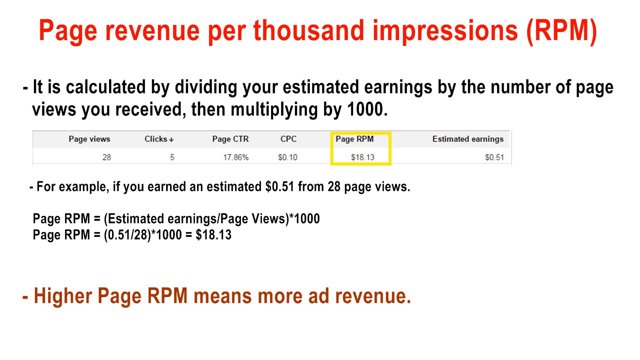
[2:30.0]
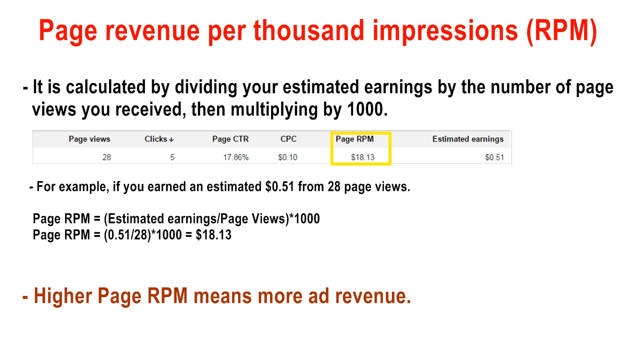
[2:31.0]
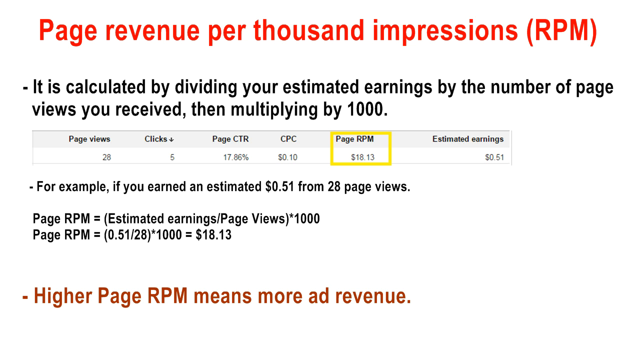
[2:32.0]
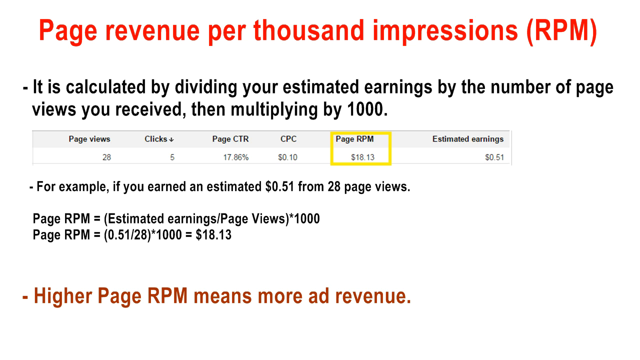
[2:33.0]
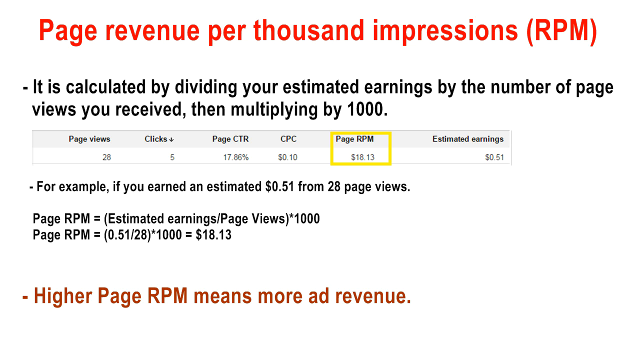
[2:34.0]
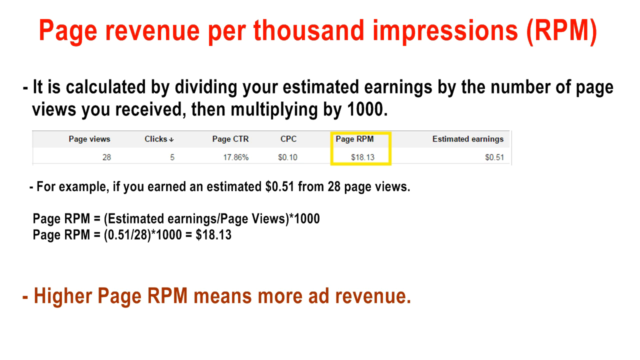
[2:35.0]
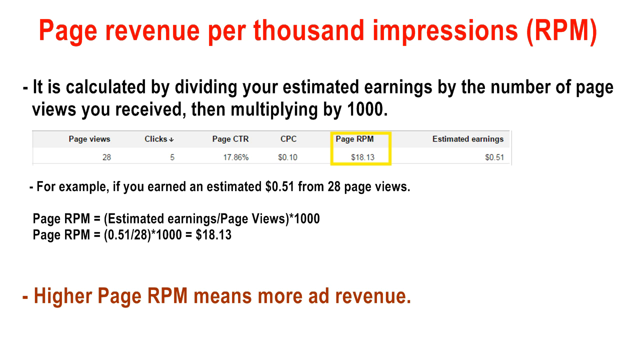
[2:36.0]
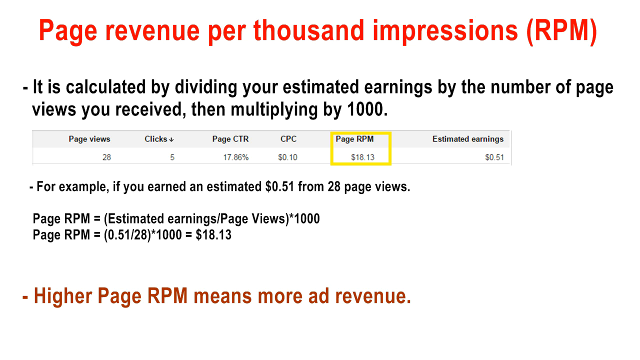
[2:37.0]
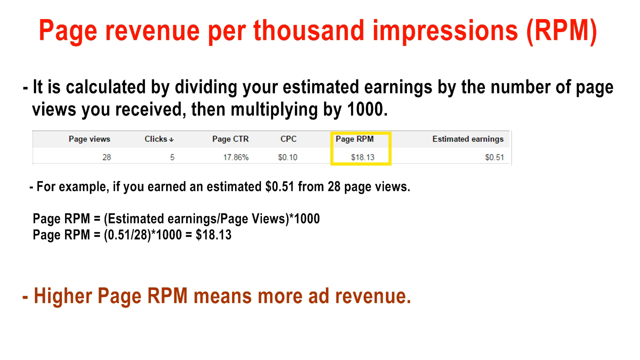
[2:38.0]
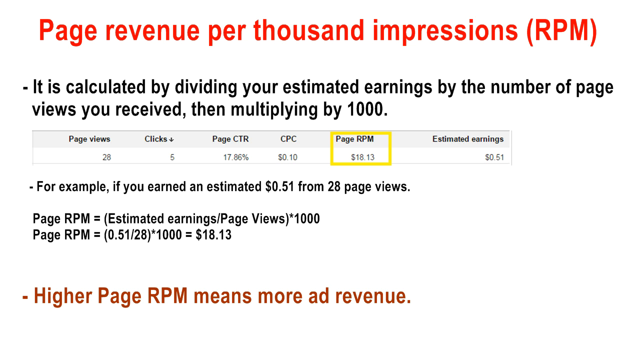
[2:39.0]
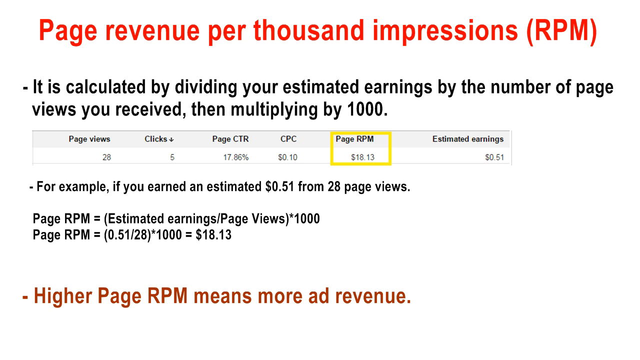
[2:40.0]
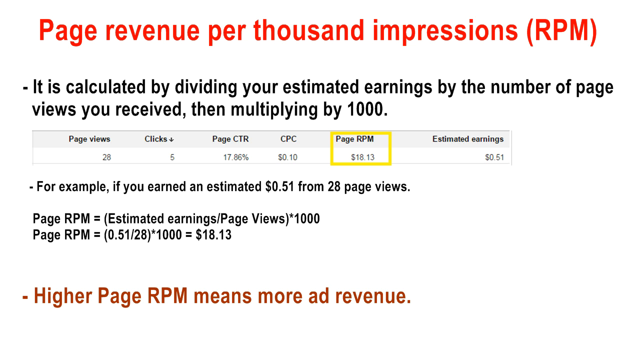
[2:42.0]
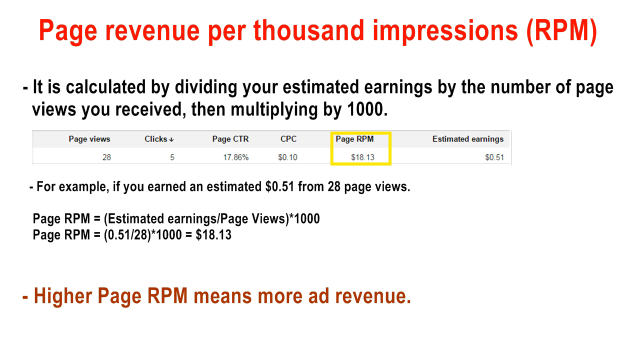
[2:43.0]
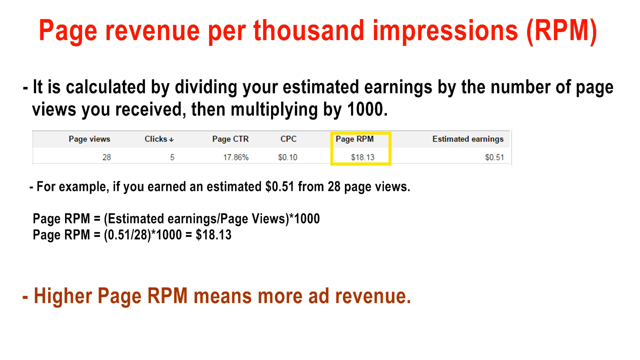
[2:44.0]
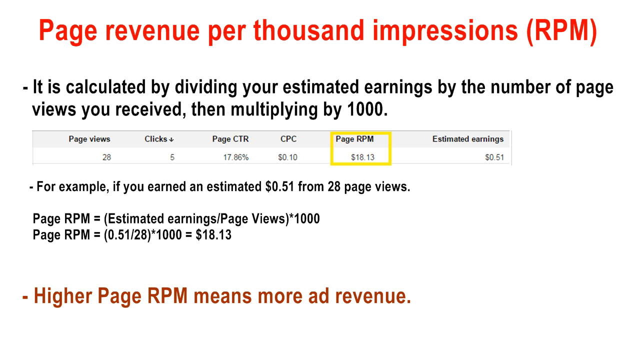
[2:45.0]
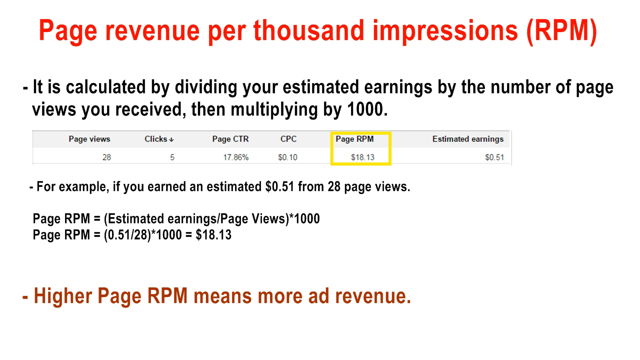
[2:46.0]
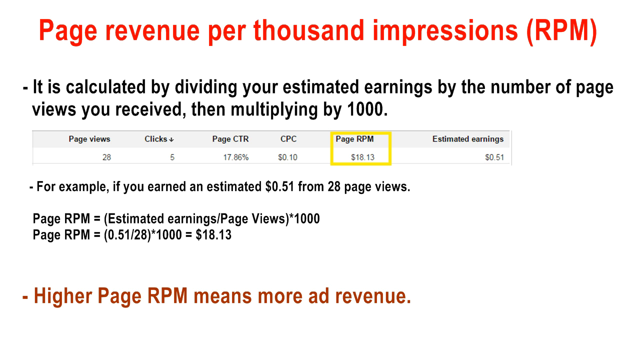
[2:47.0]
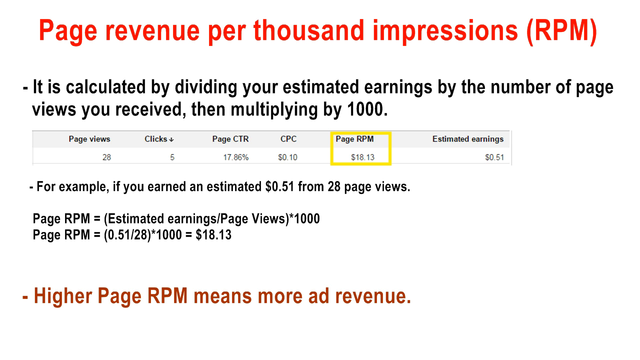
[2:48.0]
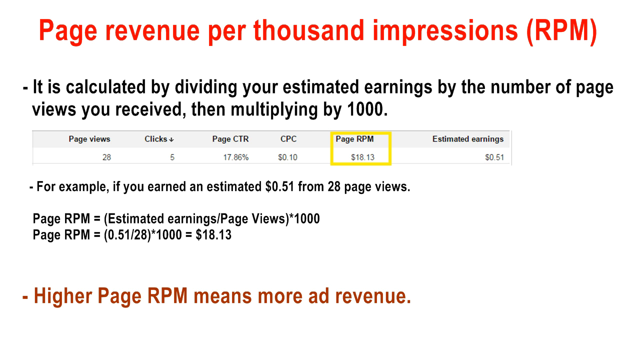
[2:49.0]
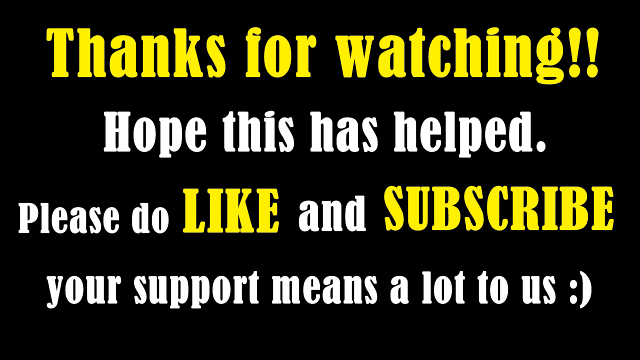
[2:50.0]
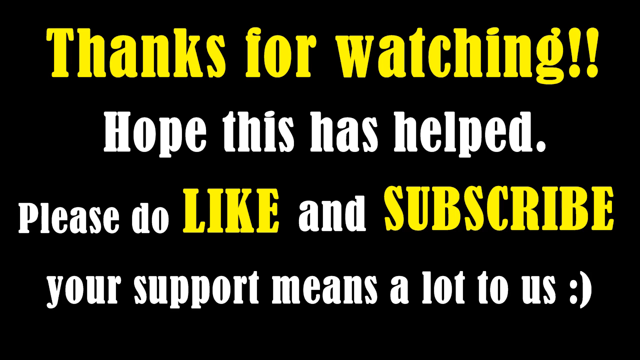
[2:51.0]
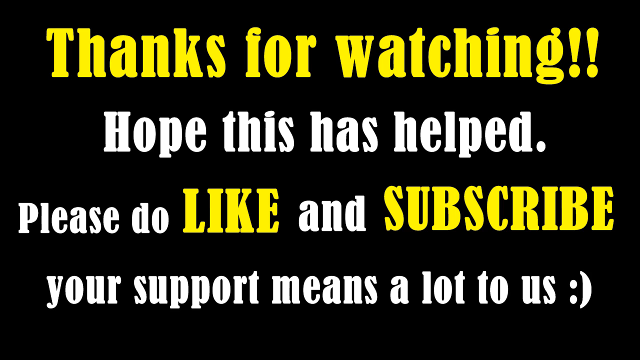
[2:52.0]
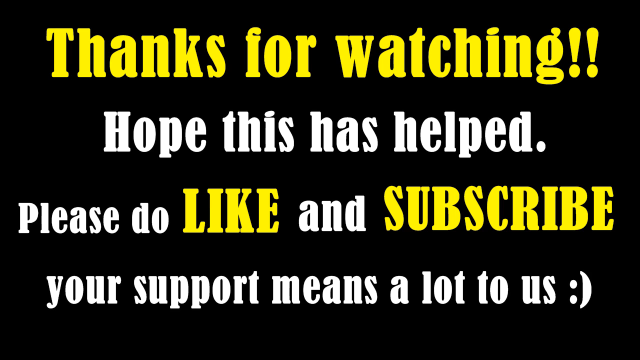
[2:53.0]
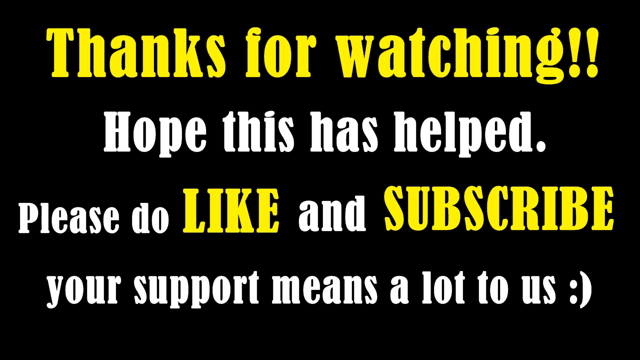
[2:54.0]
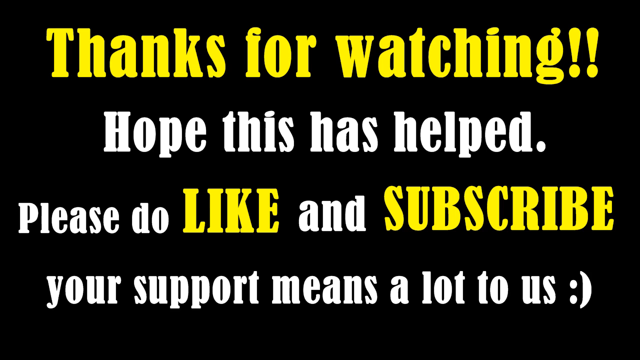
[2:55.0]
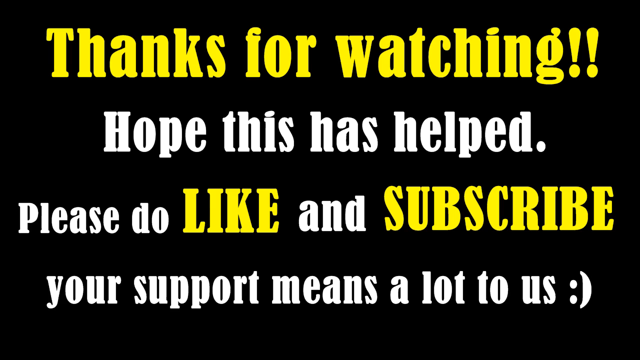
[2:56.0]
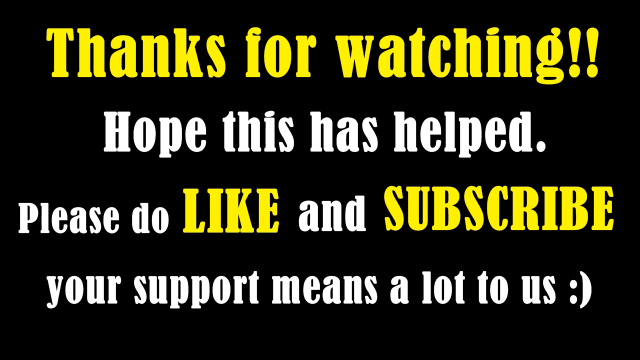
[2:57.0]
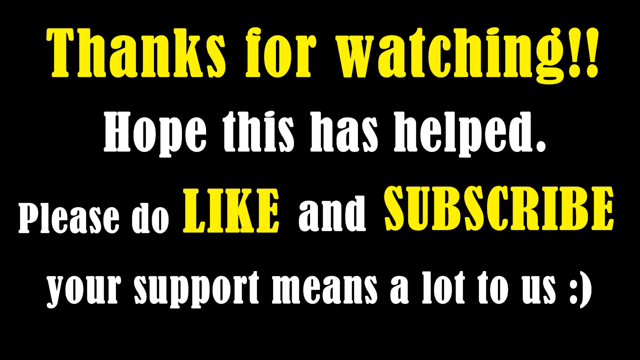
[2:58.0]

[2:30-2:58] The same page revenue per thousand impressions (RPM) screen, with red lettering on a white background, remains on screen. It then turns to a screen with a black background where large capital yellow letters read "thanks for watching!!". Below, in white lettering, it says "hope this has helped". The next line reads "please do like" and "subscribe", both in capital yellow letters, followed by "Your support means a lot to us." This ends the tutorial.